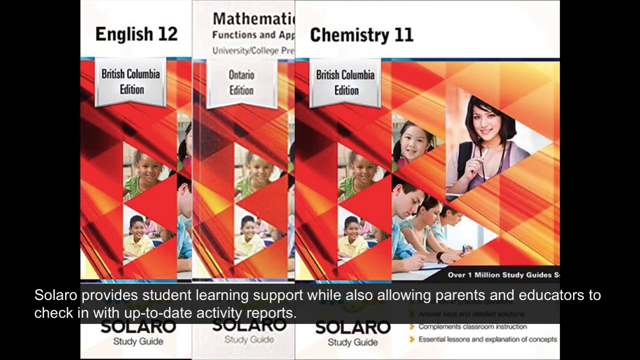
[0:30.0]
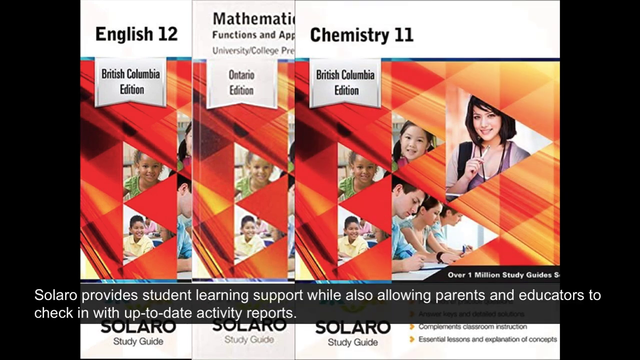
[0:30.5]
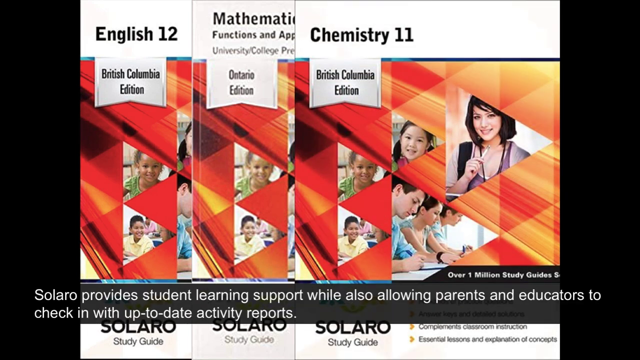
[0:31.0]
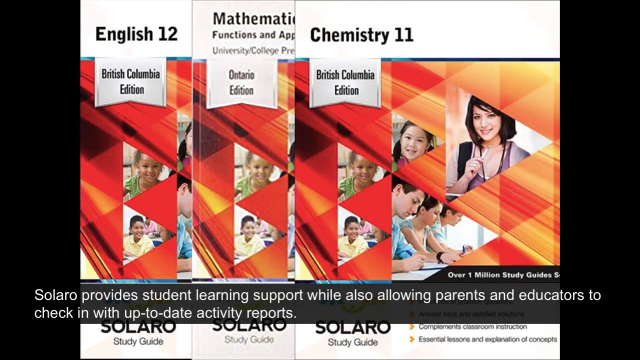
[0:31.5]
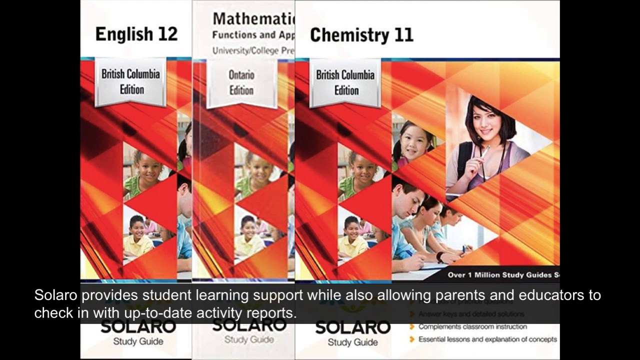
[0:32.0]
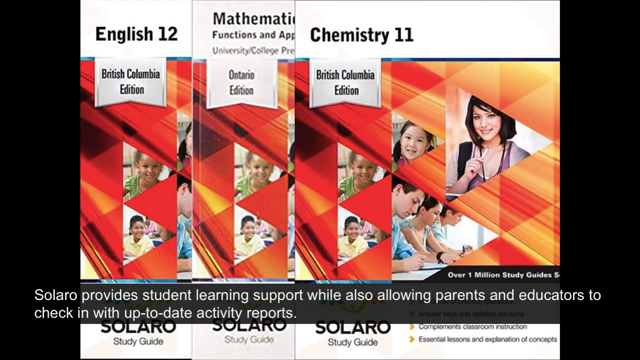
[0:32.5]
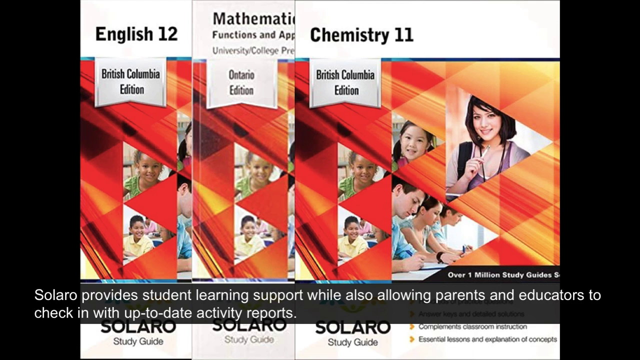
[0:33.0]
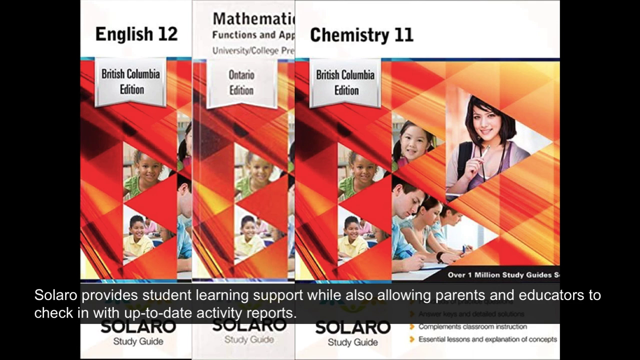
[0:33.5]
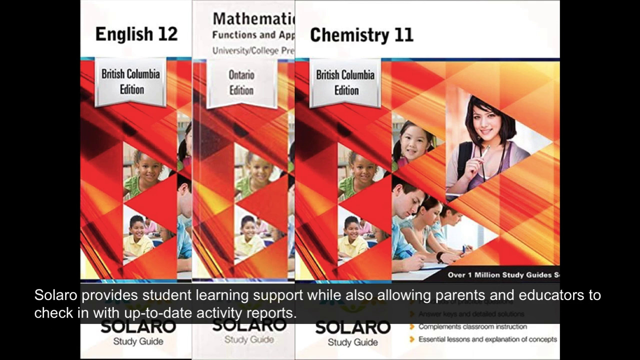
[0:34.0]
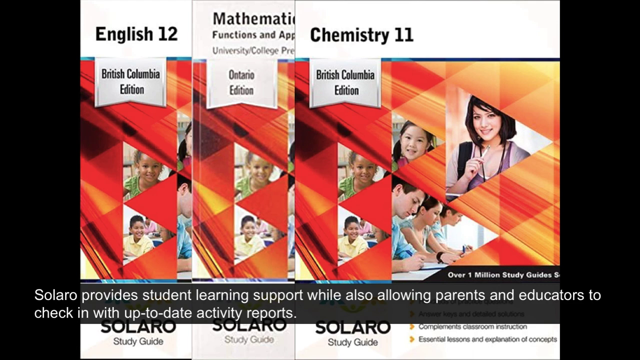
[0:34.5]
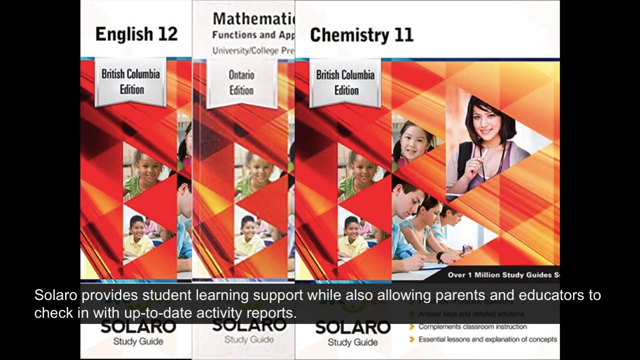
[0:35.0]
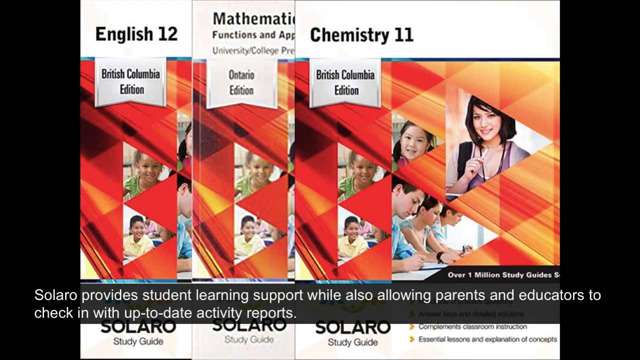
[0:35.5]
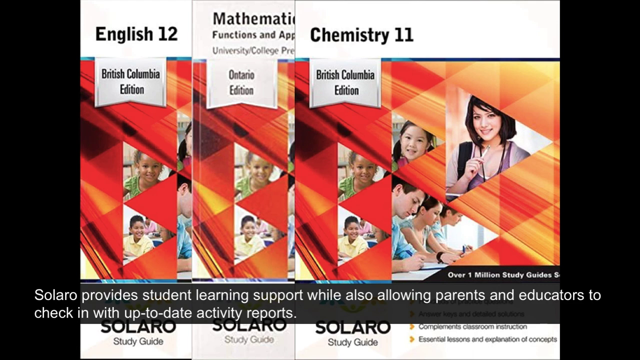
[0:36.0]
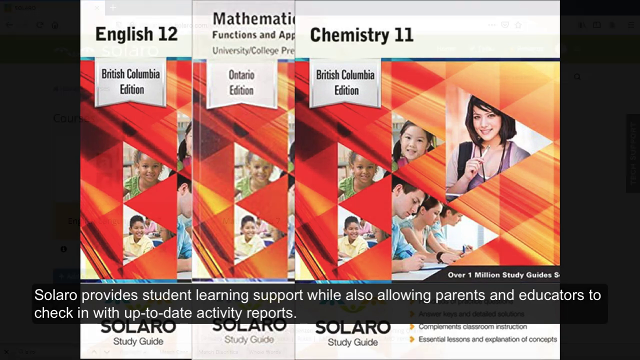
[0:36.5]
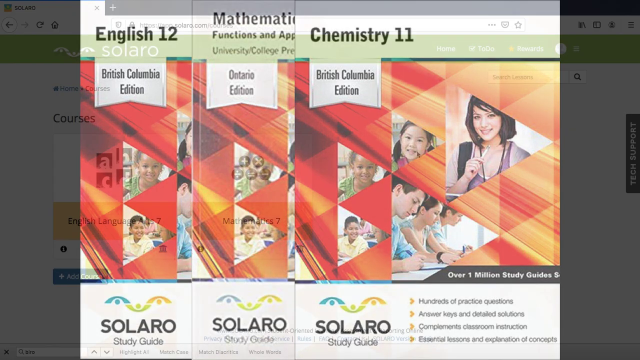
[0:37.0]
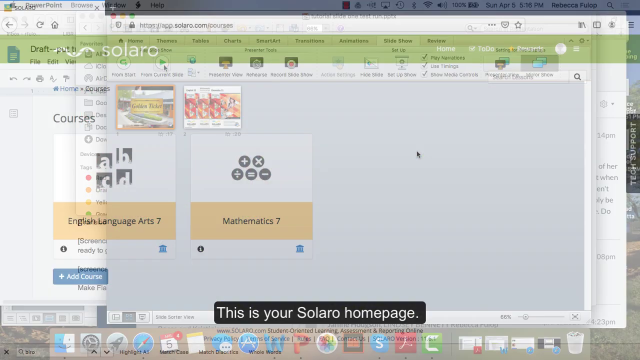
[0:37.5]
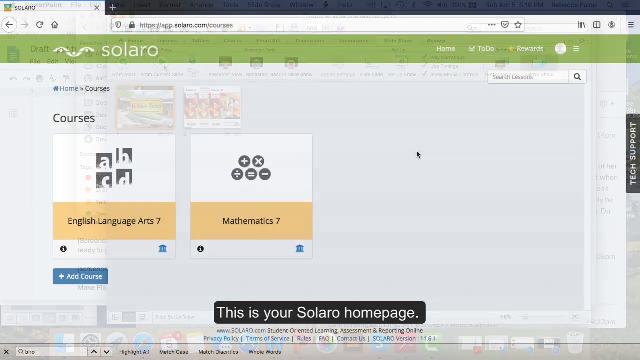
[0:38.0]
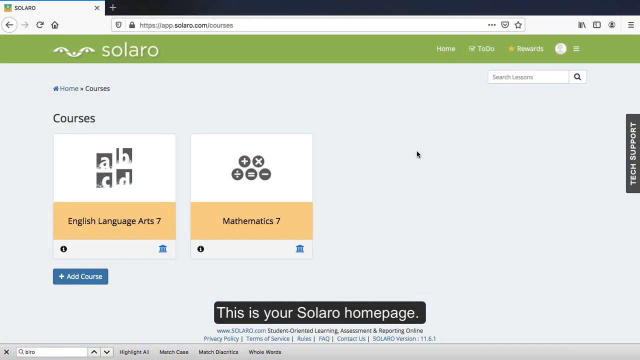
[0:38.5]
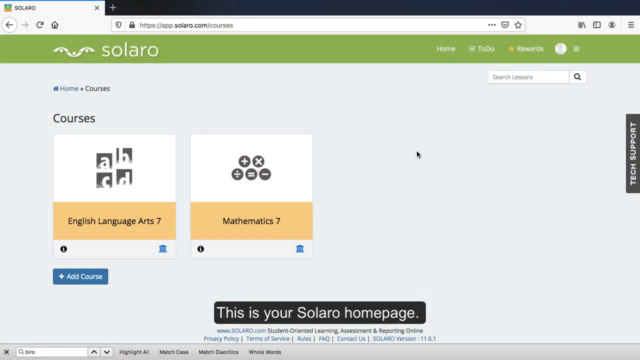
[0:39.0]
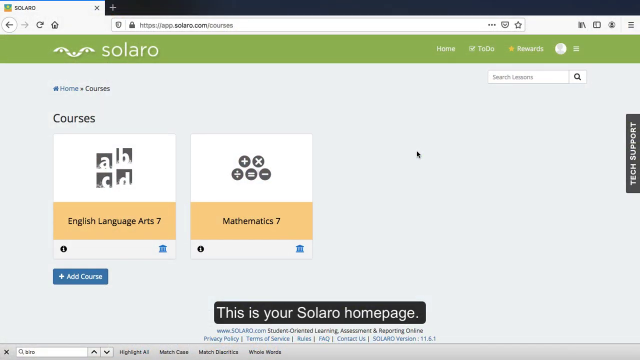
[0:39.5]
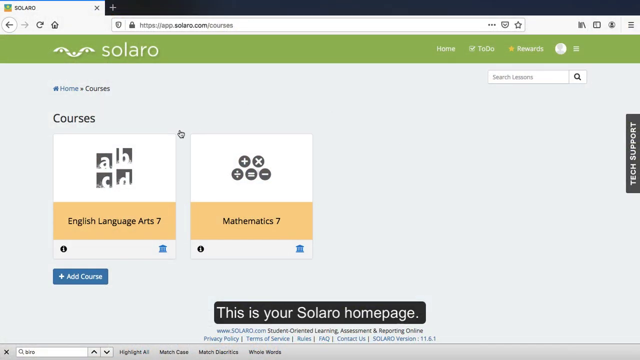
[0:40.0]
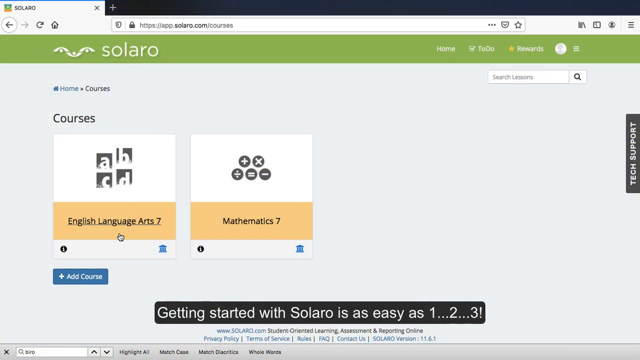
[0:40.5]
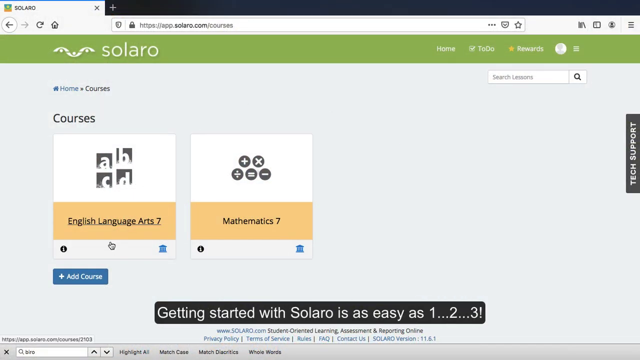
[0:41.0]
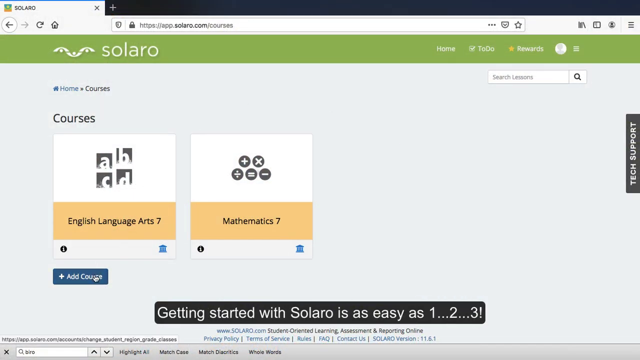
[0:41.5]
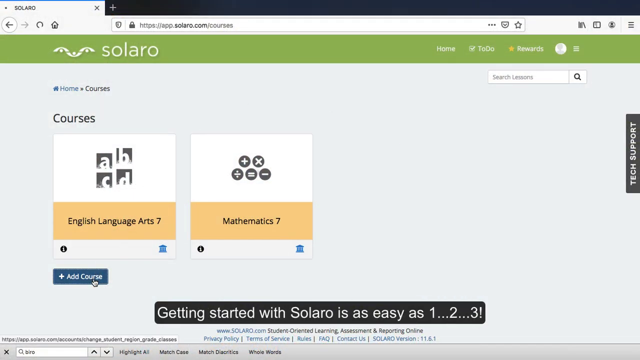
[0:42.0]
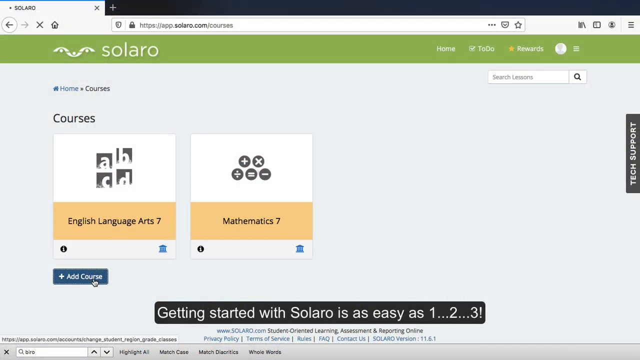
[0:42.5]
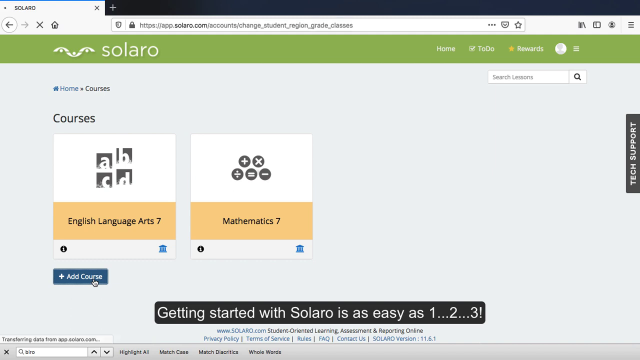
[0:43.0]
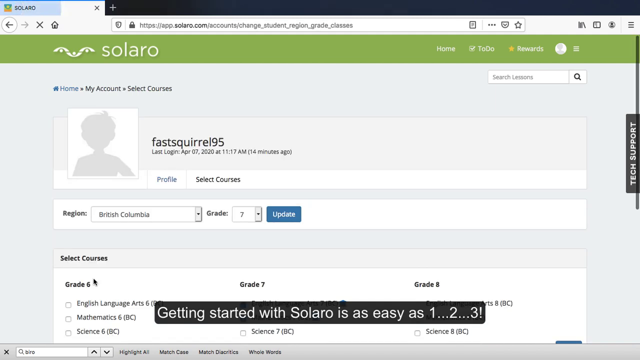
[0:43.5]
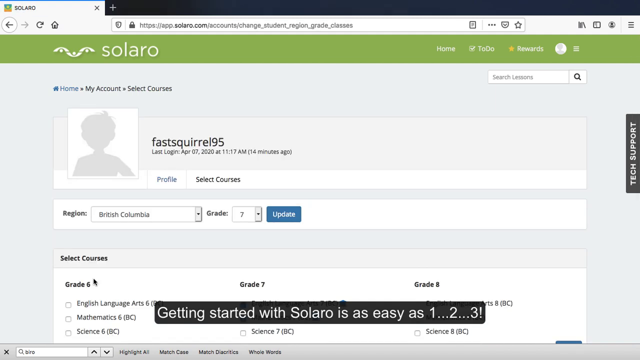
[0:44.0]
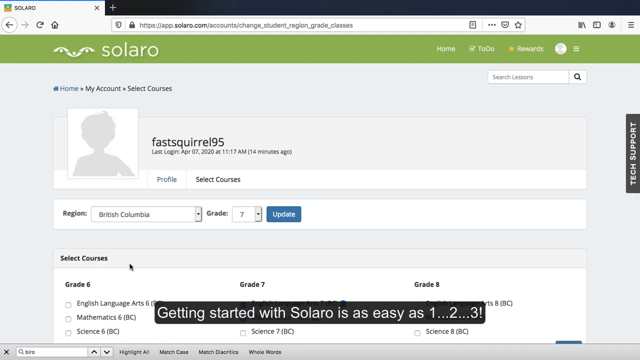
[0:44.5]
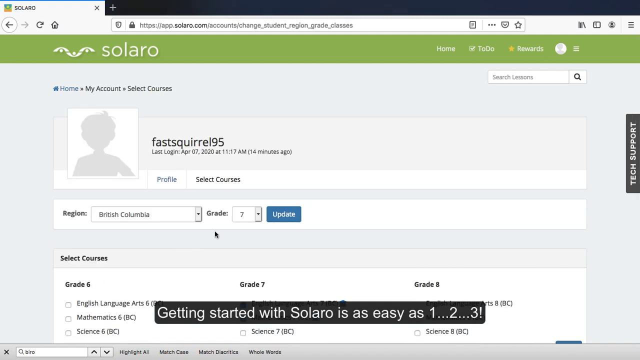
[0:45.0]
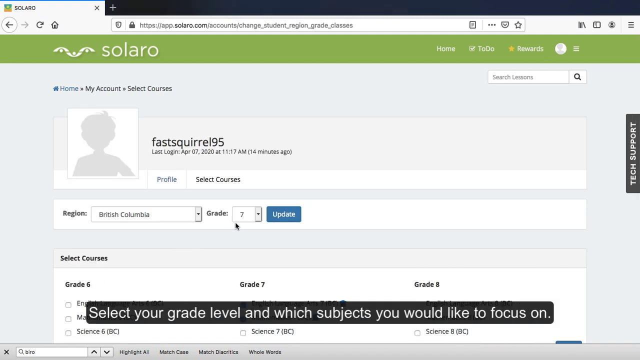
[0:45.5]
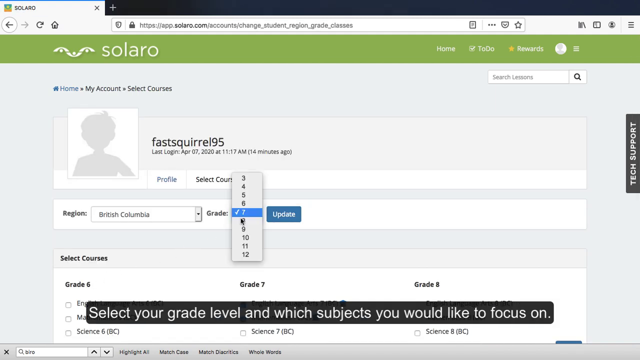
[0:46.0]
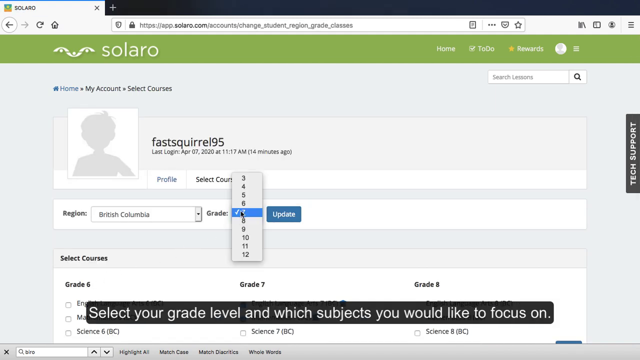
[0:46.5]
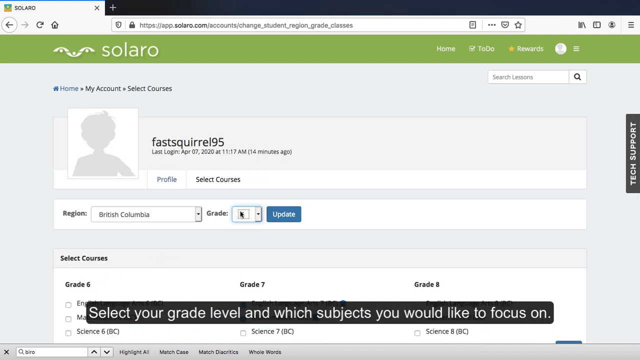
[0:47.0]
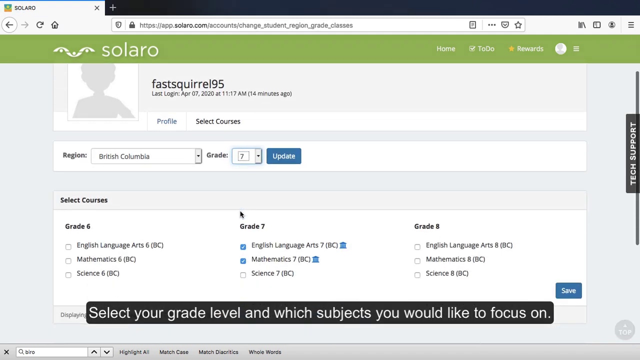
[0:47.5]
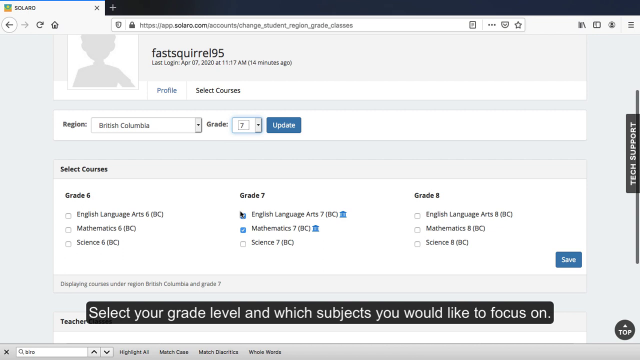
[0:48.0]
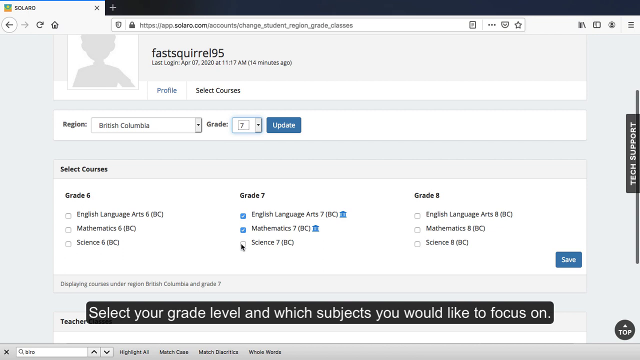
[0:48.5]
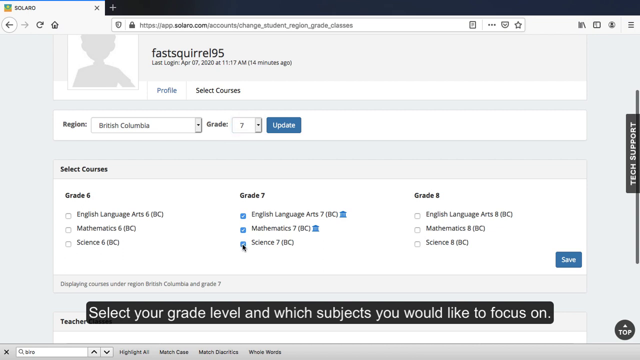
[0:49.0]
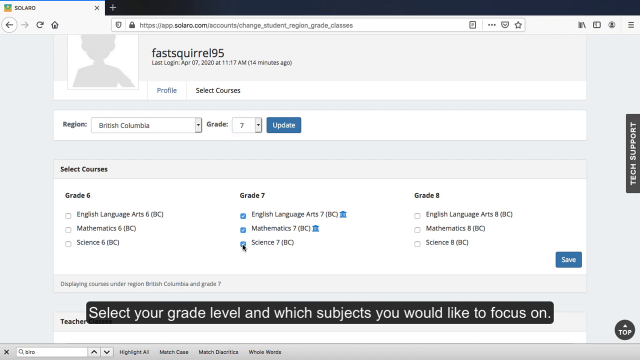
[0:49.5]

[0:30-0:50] Textbooks for English 12, Mathematics 11 and Chemistry 11, British Columbia edition, are shown with text stating that Solero provides student learning support while also allowing parents and educators to check in with up-to-date activity reports. The screen changes to a web browser showing the solero.com website and its kind of /courses directory, which lists the English Language Arts 7 course and the Mathematics 7 course. A new course is added, and on-screen text says "getting started with Solero is as easy as 1, 2, 3". The account of the signed-in user, fastsquirrel95, is shown, with the region set to British Columbia and the grade set to 7; the grade is changed to 8 and then back to 7 without being updated. No people appear in this part of the video.